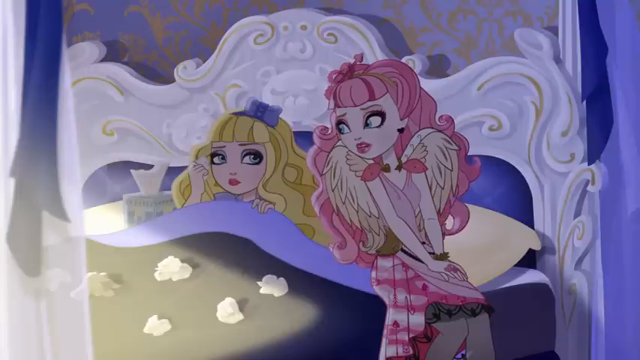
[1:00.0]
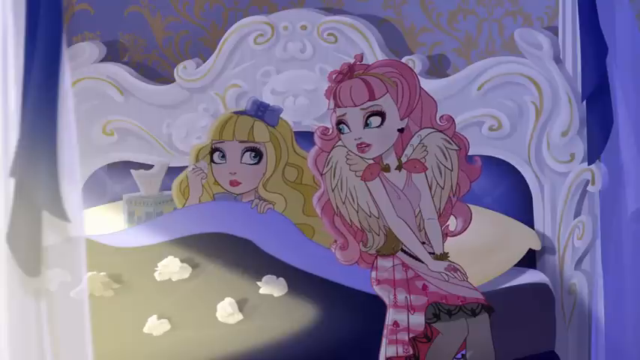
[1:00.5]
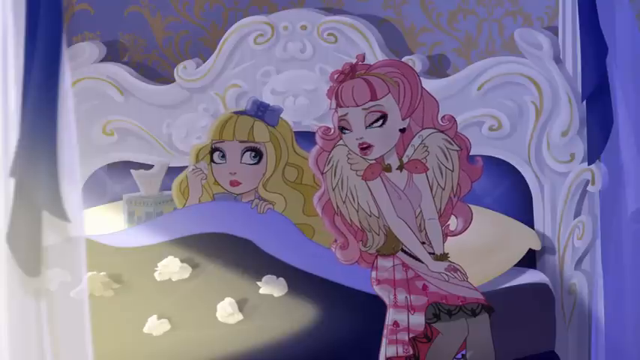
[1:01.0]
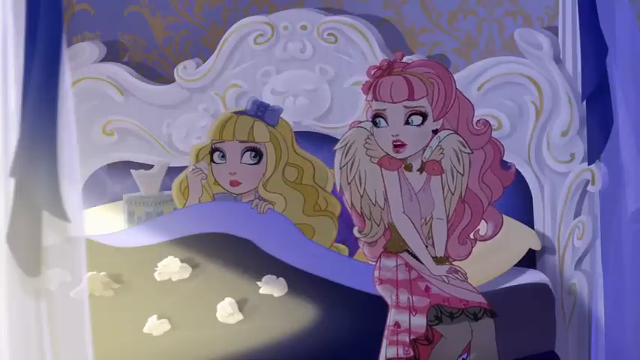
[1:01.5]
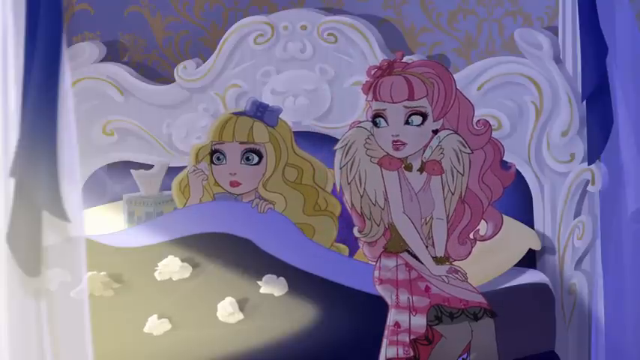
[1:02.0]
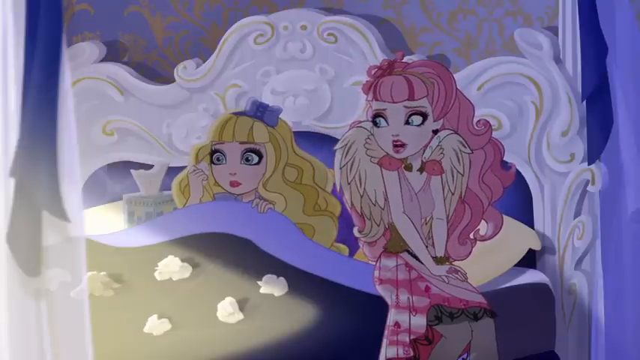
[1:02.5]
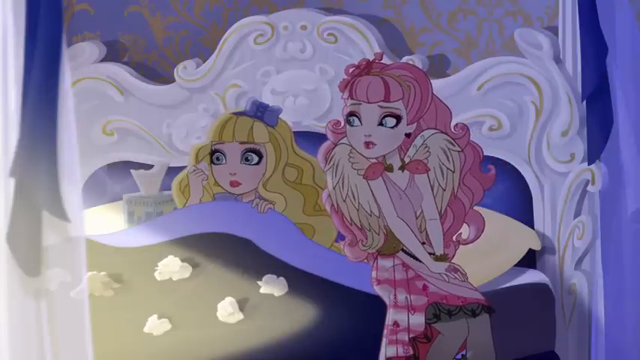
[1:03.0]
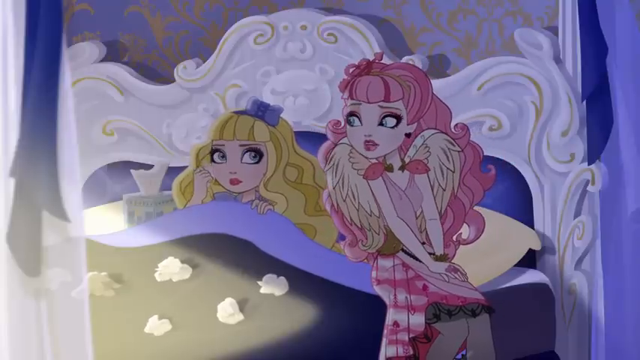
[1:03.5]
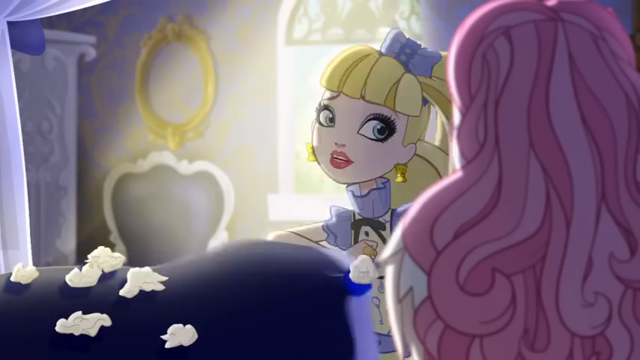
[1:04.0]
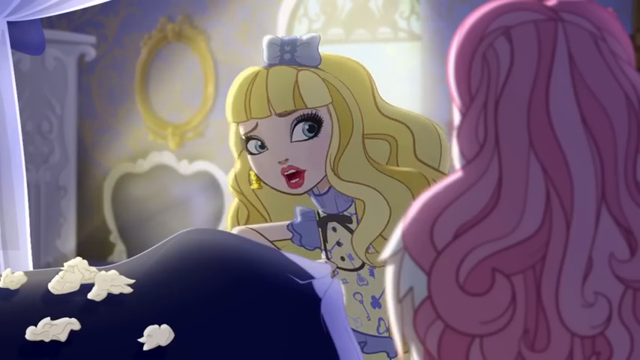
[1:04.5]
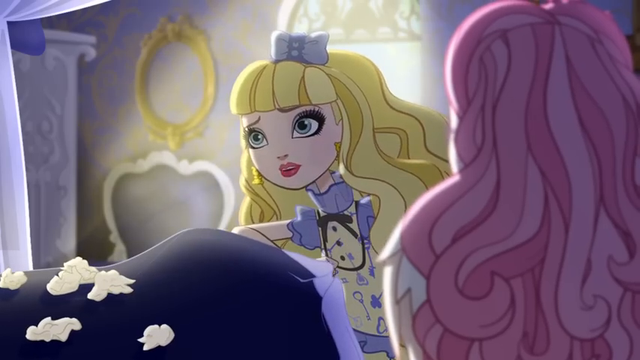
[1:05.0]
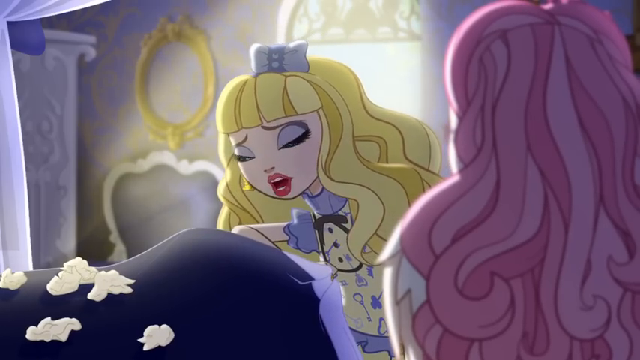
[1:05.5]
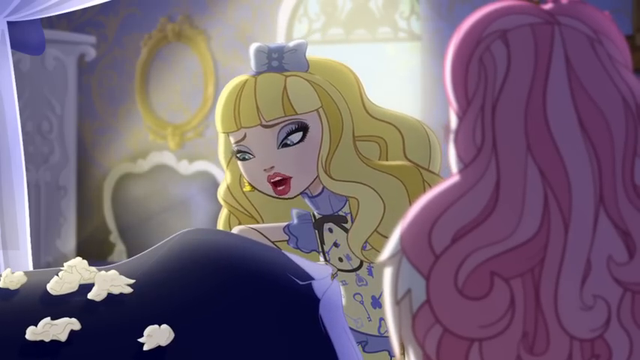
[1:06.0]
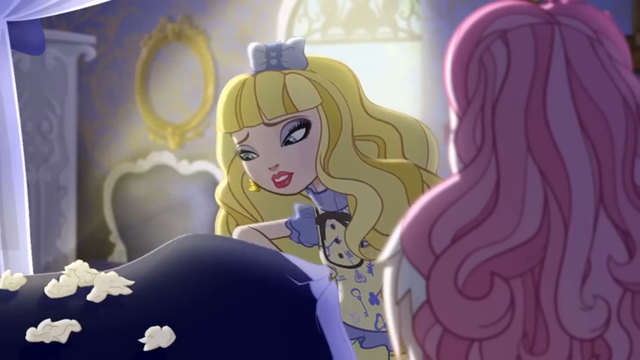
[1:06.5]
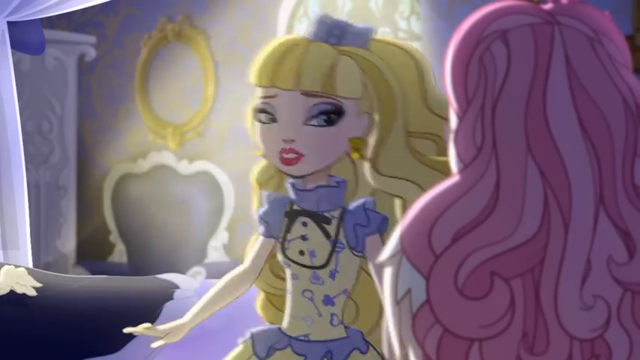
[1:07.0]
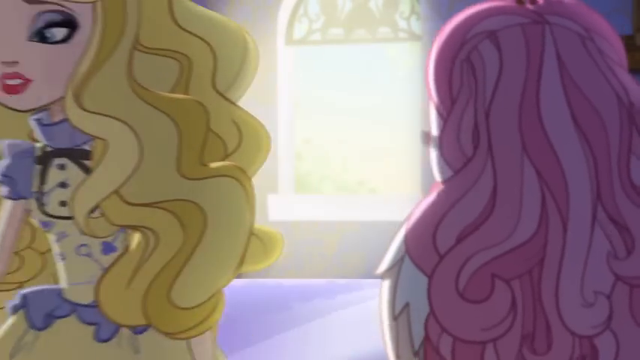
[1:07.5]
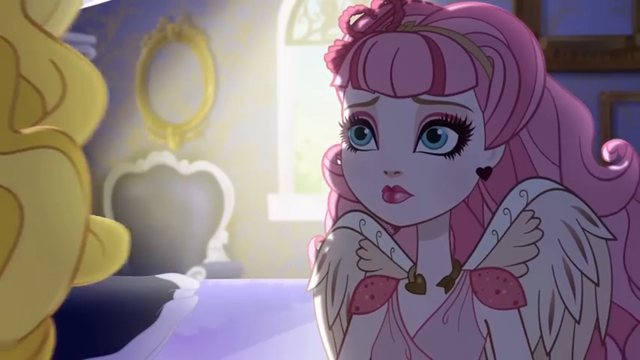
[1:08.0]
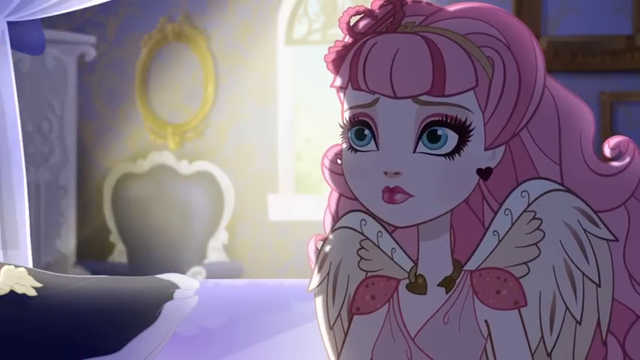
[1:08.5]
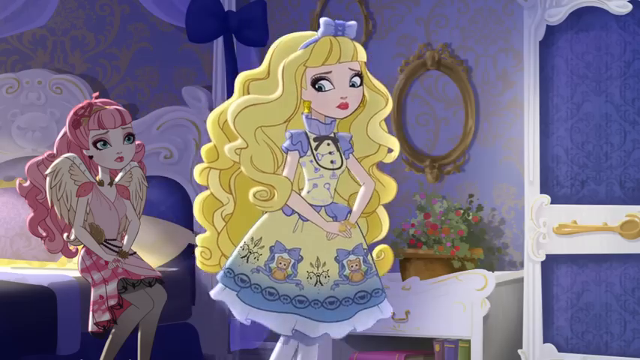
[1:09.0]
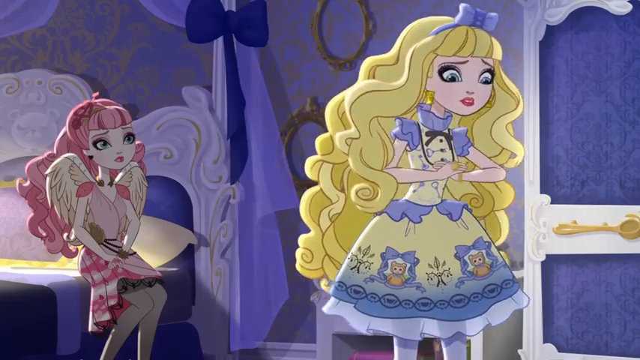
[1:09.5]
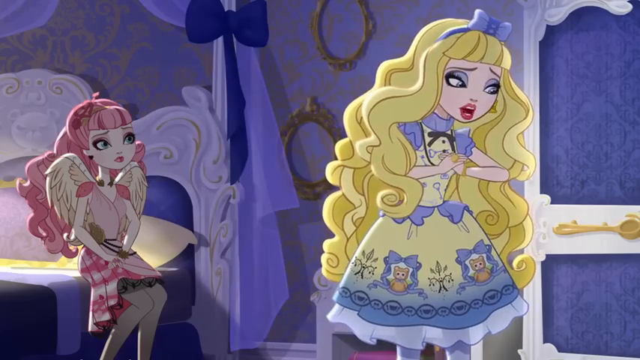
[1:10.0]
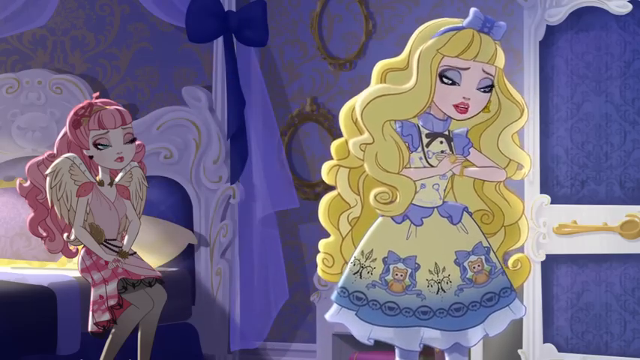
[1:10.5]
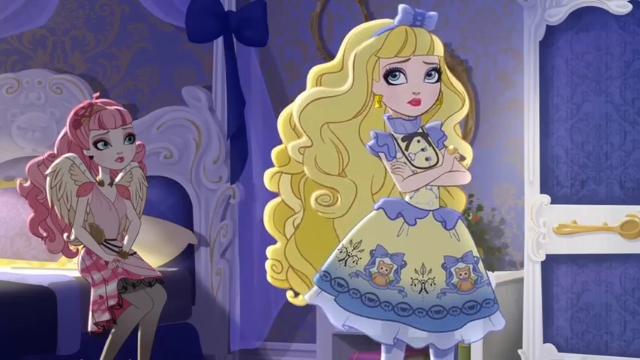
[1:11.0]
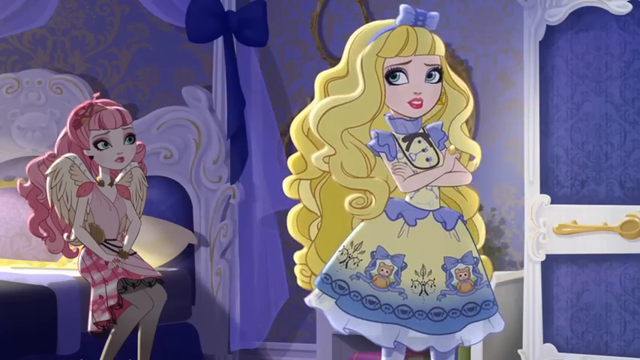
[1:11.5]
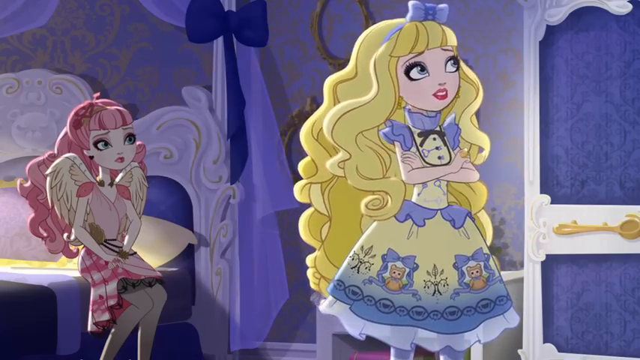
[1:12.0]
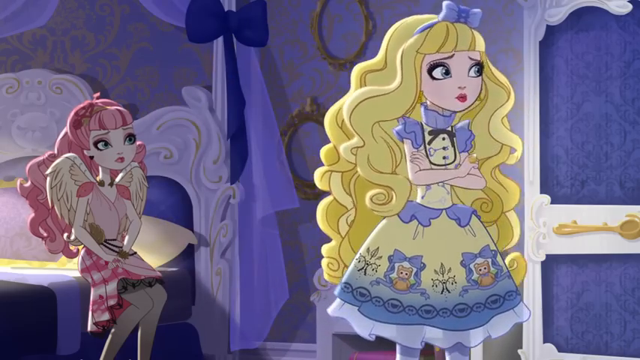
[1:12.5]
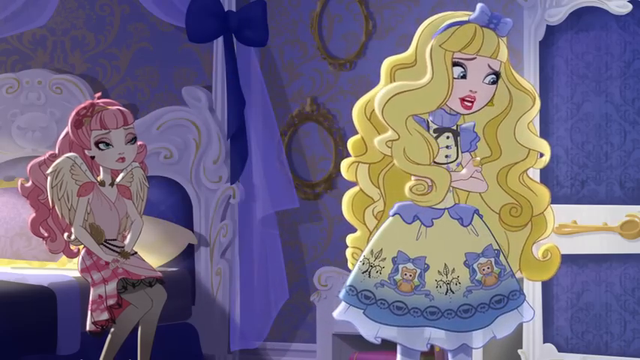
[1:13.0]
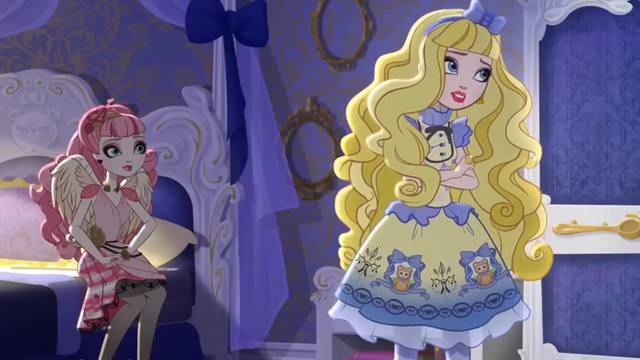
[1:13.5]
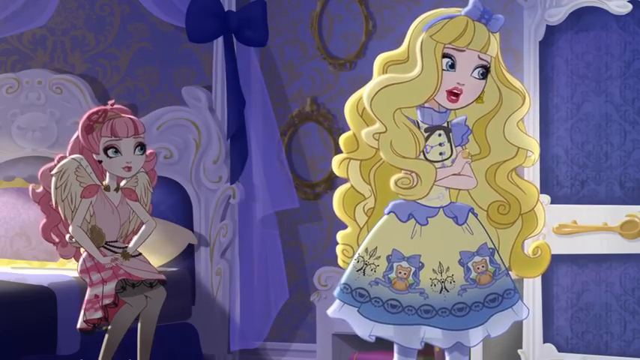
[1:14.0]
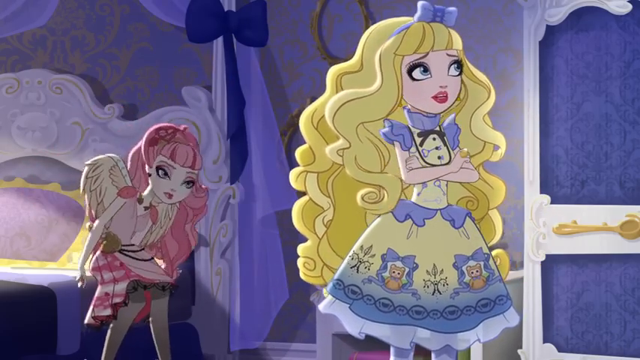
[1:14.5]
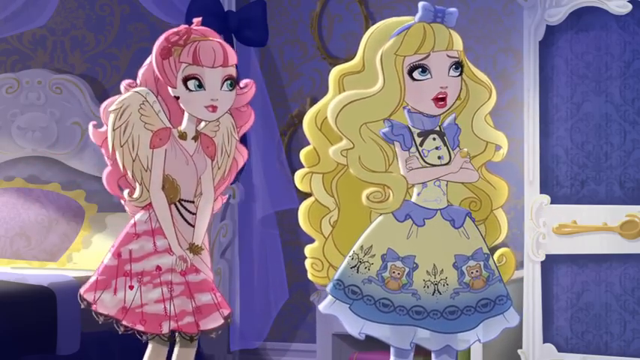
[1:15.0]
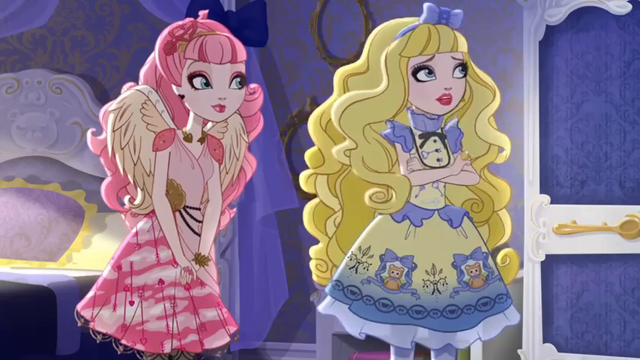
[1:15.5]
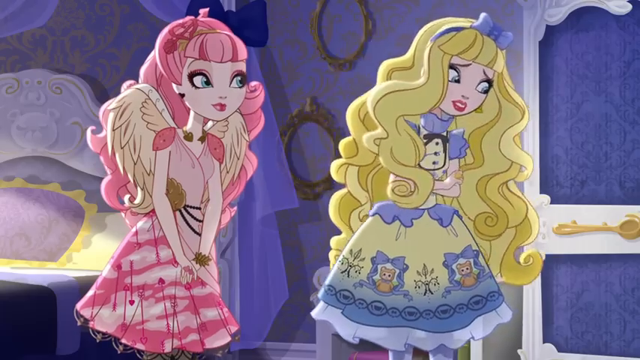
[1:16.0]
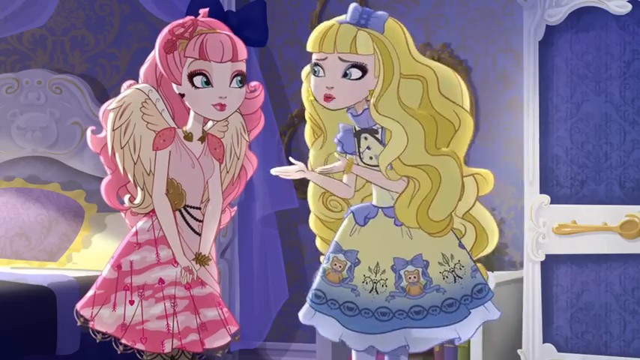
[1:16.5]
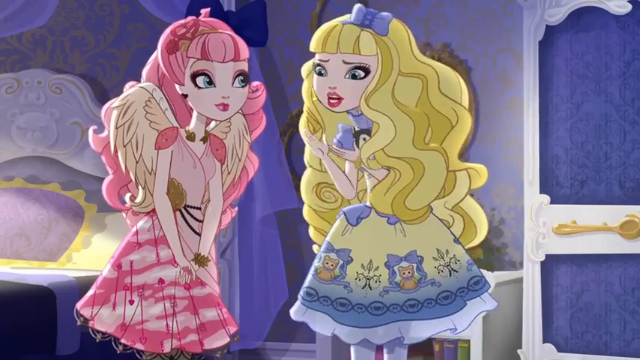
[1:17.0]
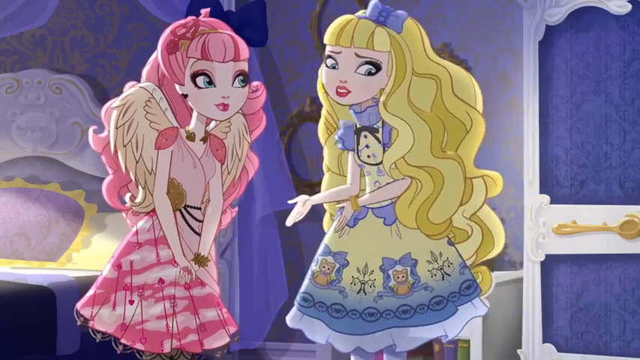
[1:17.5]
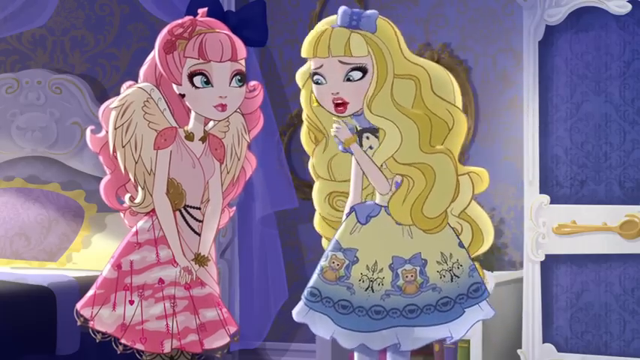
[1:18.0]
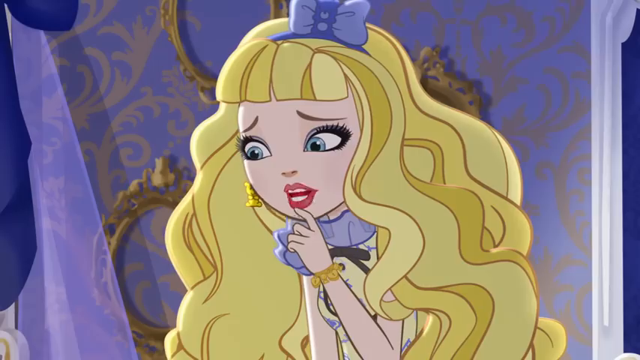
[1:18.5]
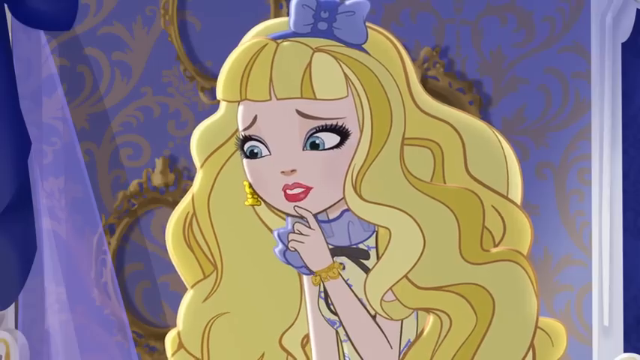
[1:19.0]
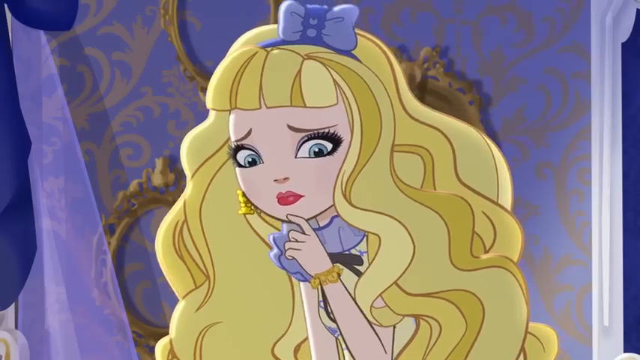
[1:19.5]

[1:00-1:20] The blonde fairy-tale princess high school student sits underneath the covers, covered in a bunch of napkins she has used for her tears, with a box of tissues beside her to keep wiping more tears. The girl with pink hair, wings and a pink dress leans over, trying to empathize and help her feel better. The blonde girl then sits up, gets out of the bed and walks away, throwing some sort of fit. She crosses her arms, keeps carrying on, and turns around. She seems to be arguing with herself.